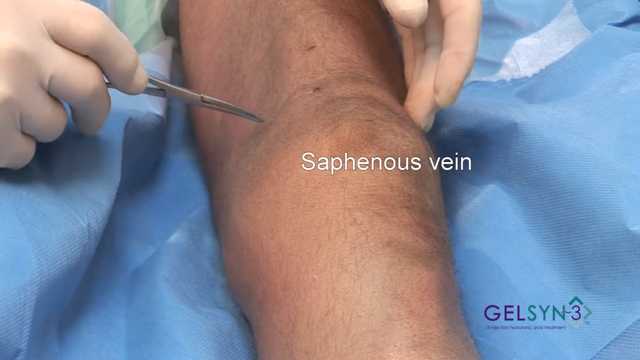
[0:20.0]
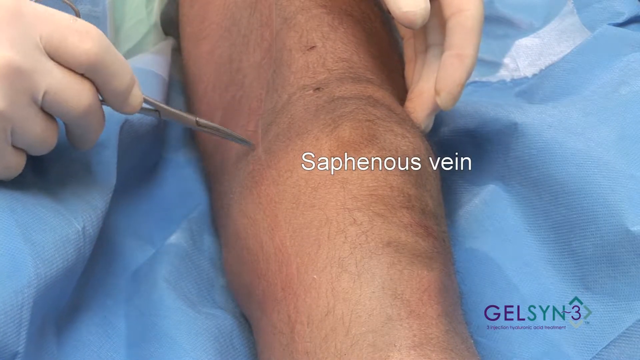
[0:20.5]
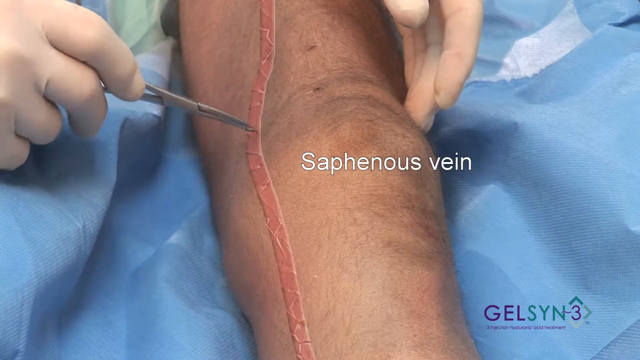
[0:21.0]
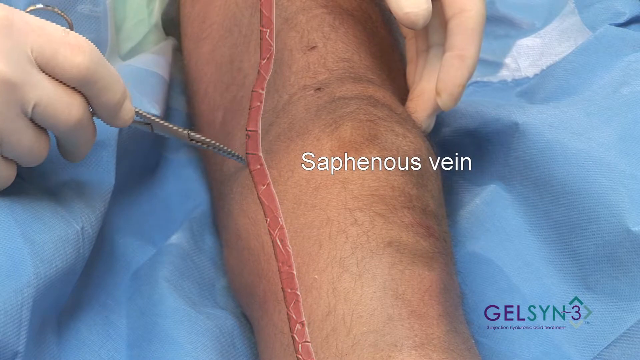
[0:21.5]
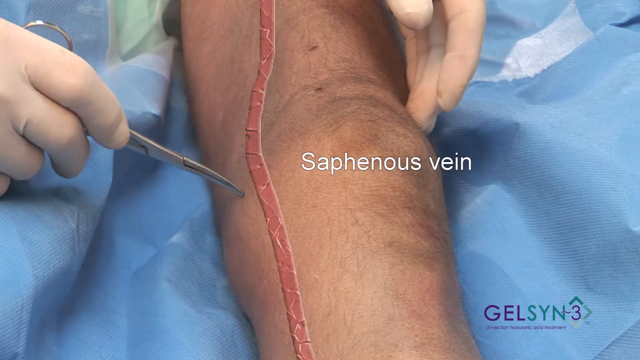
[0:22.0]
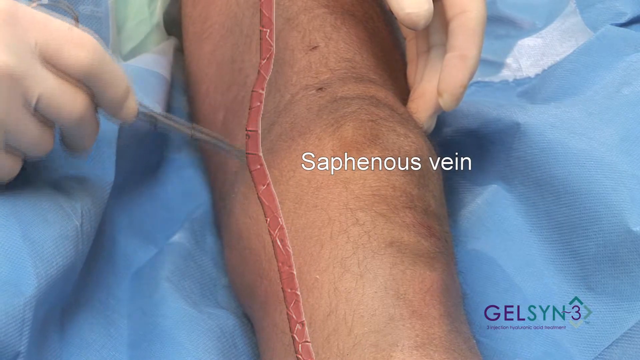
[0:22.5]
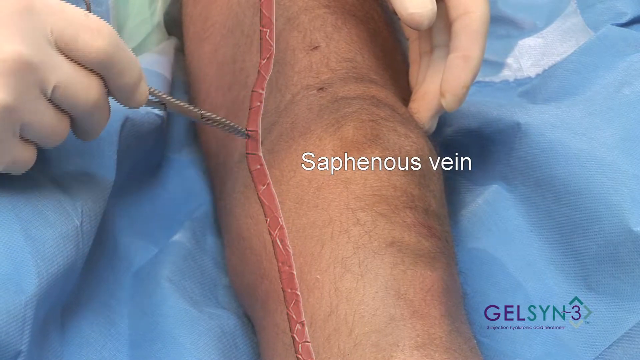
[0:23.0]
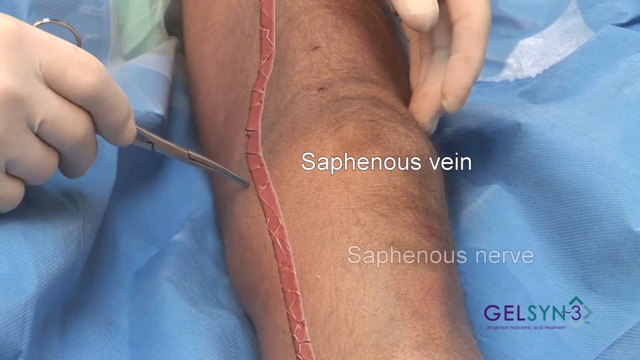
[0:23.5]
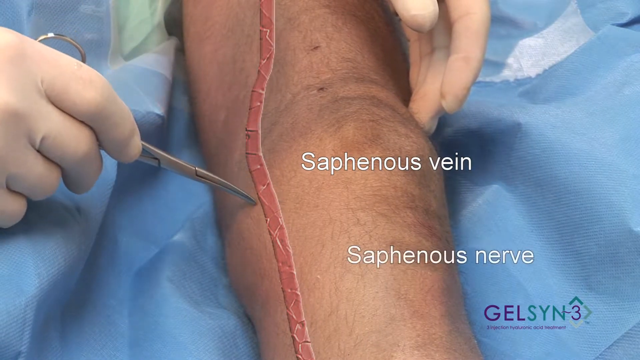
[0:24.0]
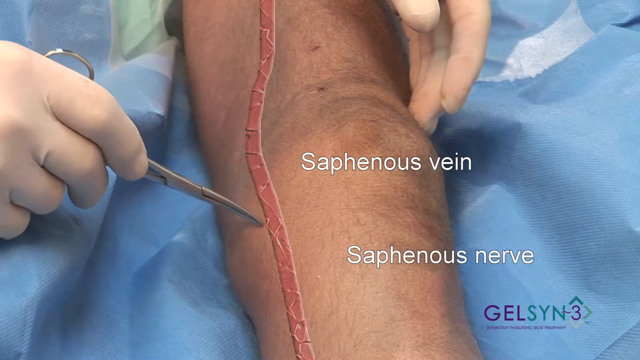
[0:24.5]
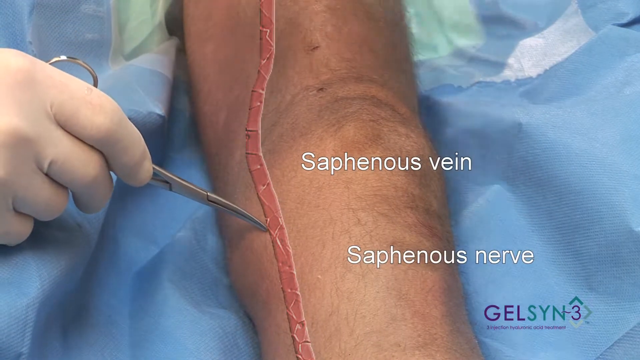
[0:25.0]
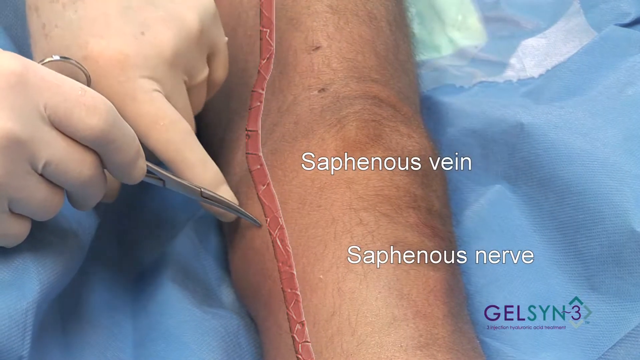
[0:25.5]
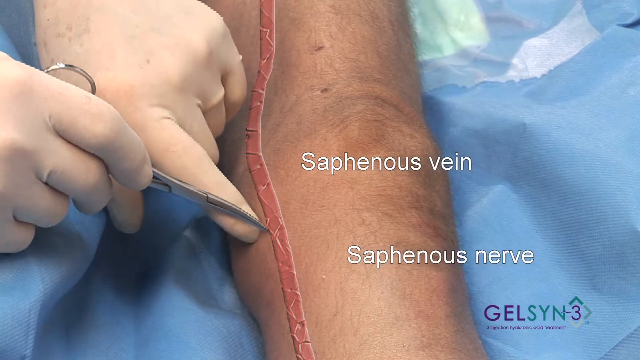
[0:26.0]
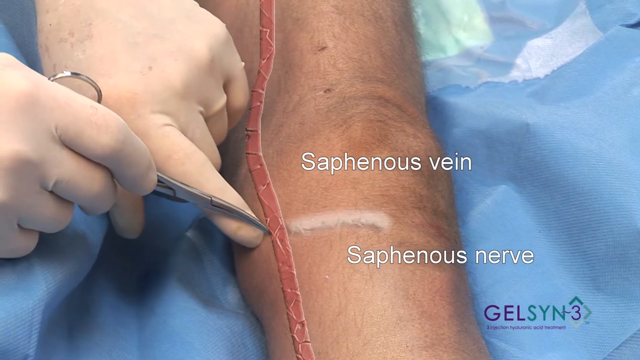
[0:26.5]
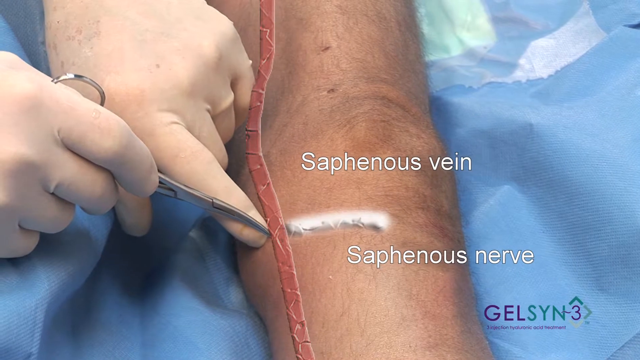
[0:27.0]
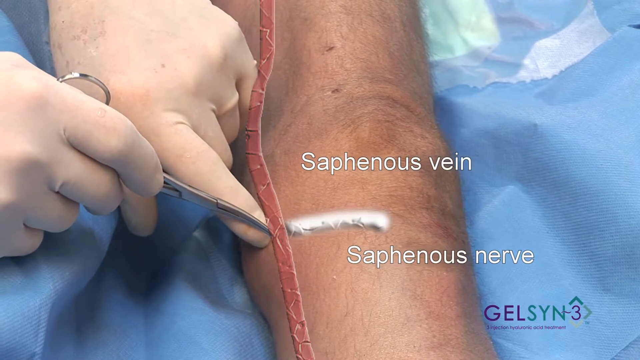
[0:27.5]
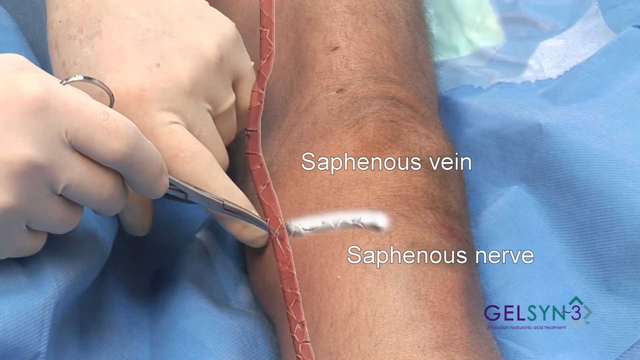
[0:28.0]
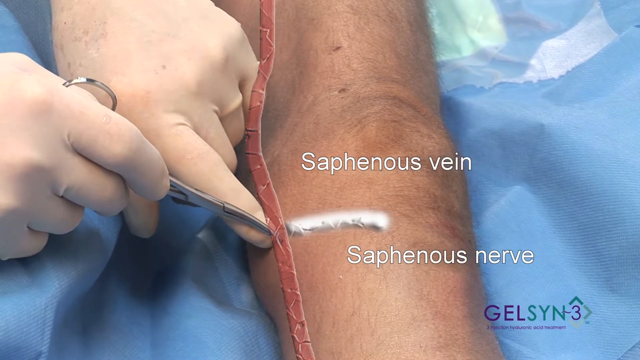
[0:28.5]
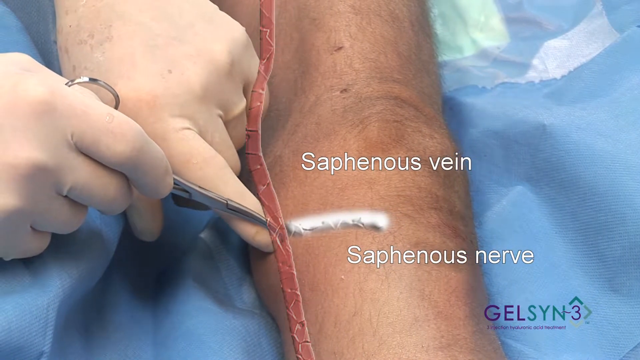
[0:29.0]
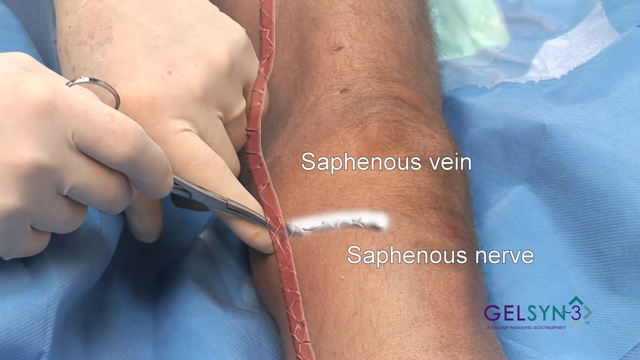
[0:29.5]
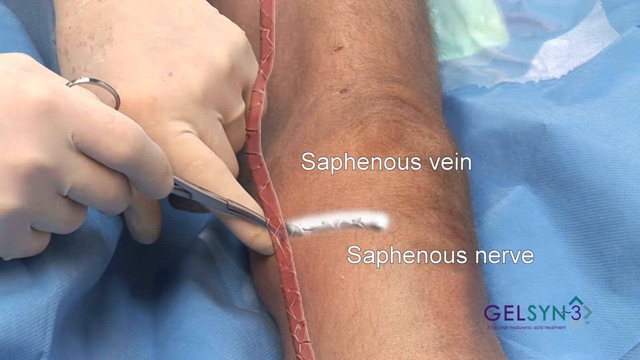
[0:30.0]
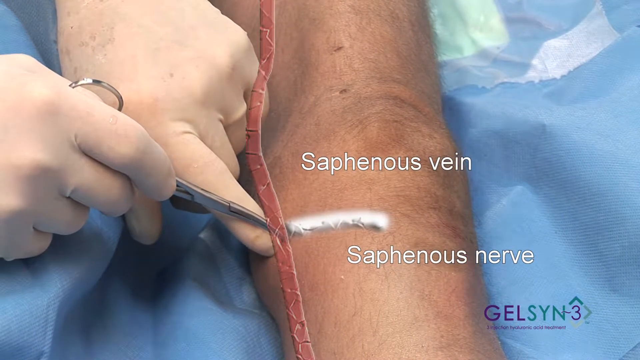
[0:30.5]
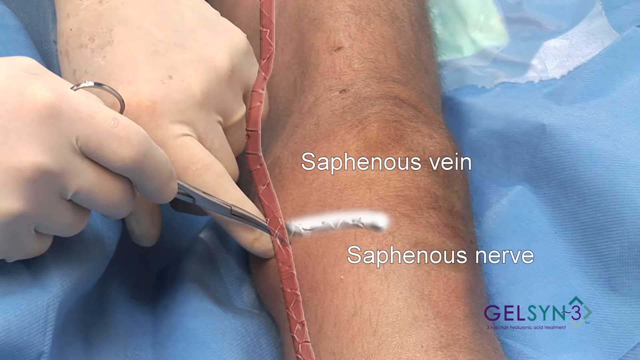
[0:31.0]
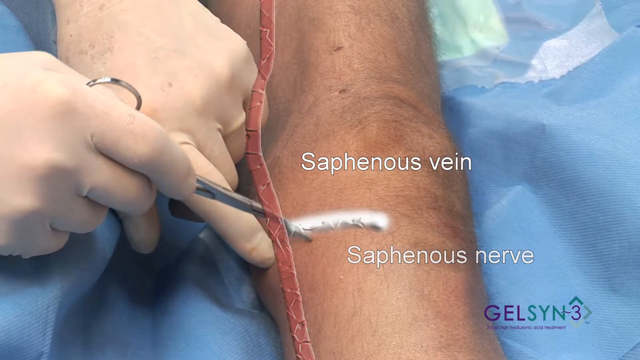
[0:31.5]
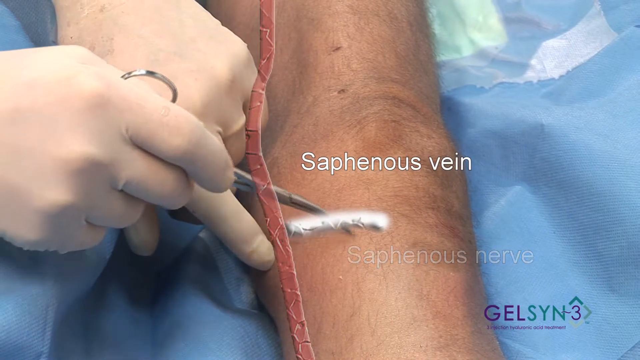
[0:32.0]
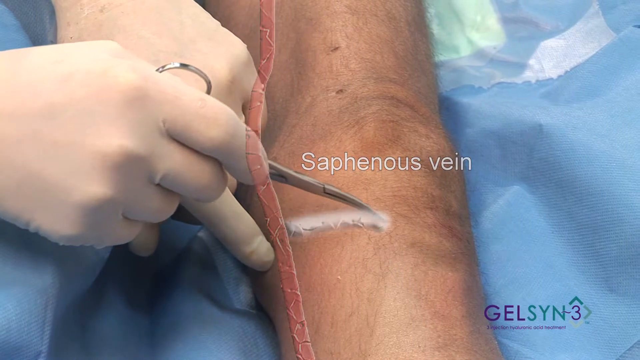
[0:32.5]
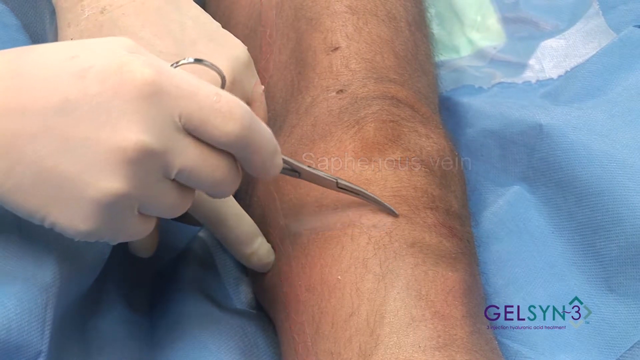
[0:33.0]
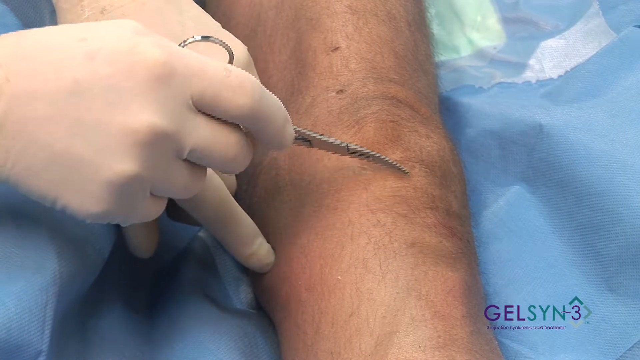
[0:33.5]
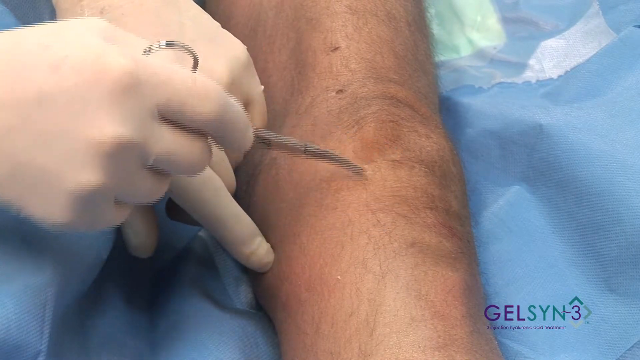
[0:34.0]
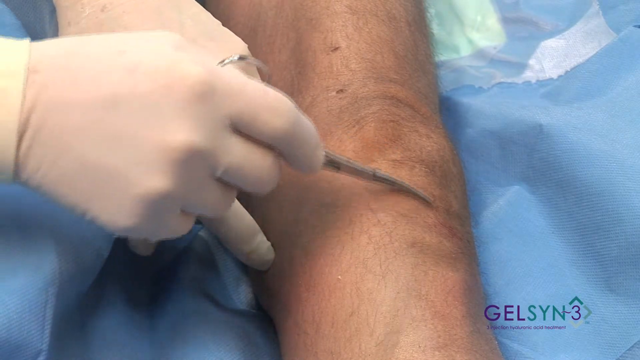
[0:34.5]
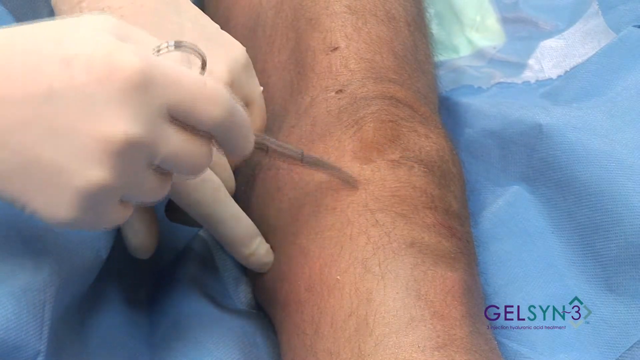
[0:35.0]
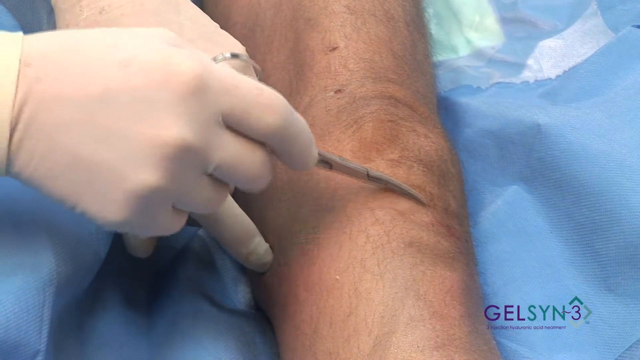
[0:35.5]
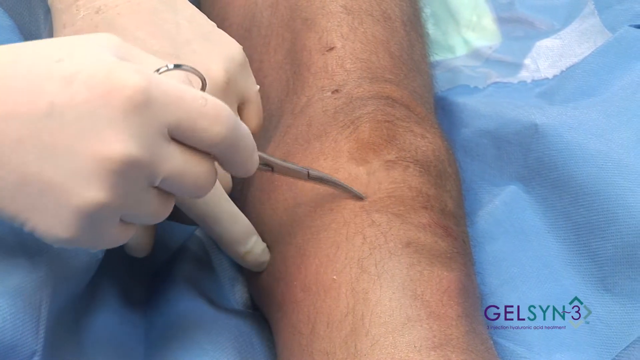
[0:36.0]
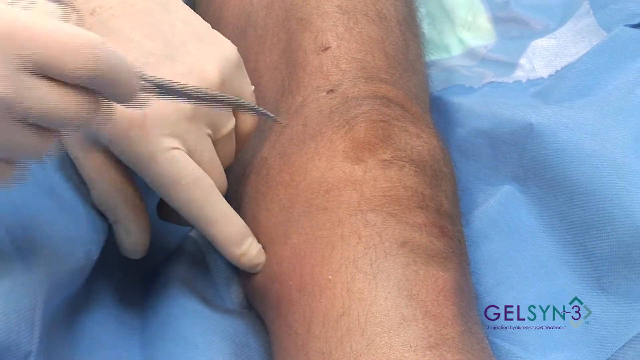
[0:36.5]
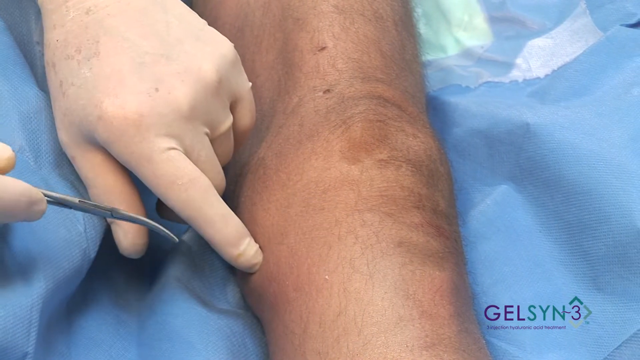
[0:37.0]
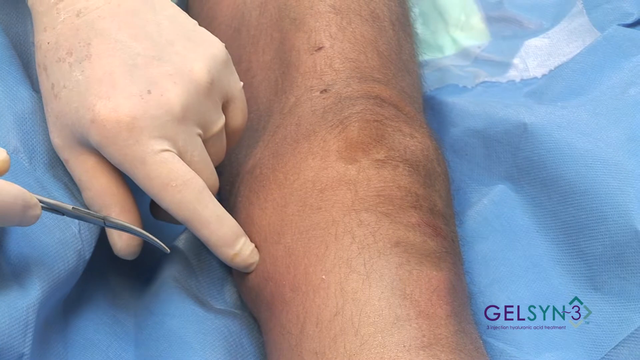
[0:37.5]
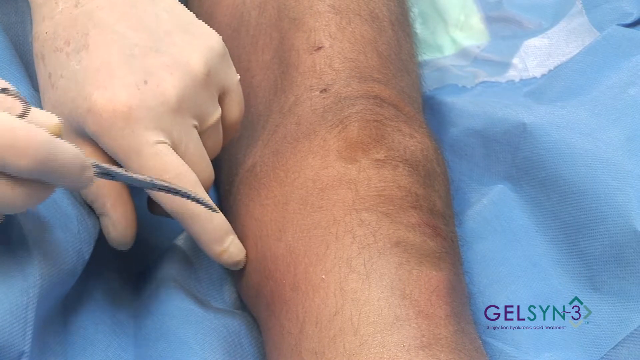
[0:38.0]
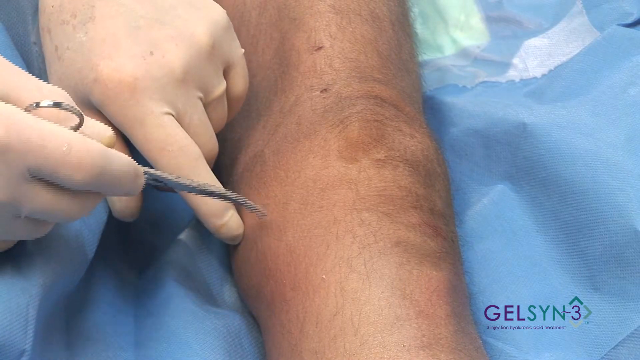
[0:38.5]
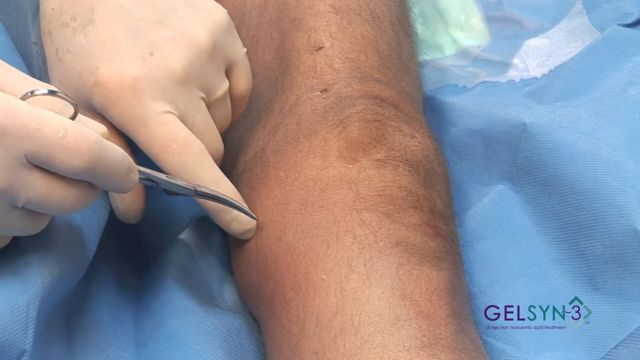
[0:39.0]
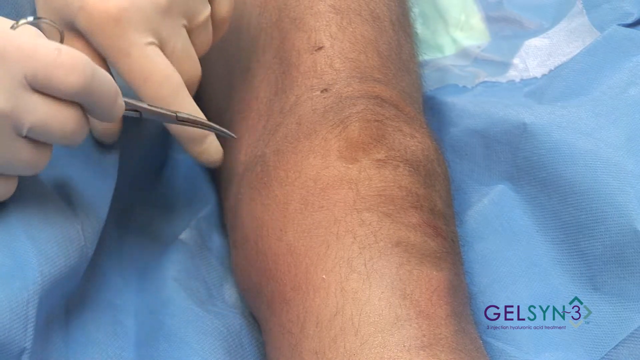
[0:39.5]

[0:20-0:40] As the scissors run down the length of the leg, a small cartoon graphic that looks like a vein appears over it, placing a pink vein over the leg. Beneath the "saphenous vein" label and a little to the right, white text now reads "saphenous nerve." The left gloved hand comes over and points to the tip of the scissors held in the right hand. Another illuminated white line, representing the nerve, appears perpendicular to the pink vein, extending across about an inch. The scissors follow the nerve graphic across the leg. The small medical scissors then gesture in a circle and touch the knee, indicating the kneecap area, before returning to moving down the side of the knee.